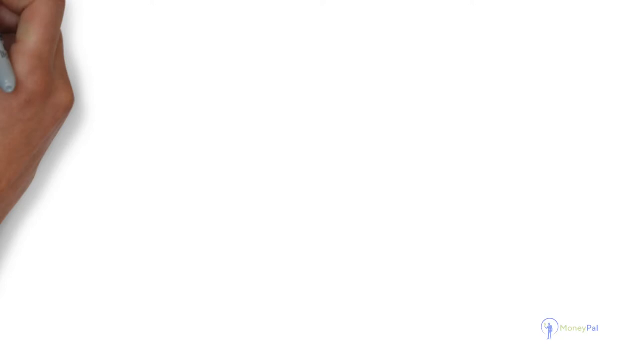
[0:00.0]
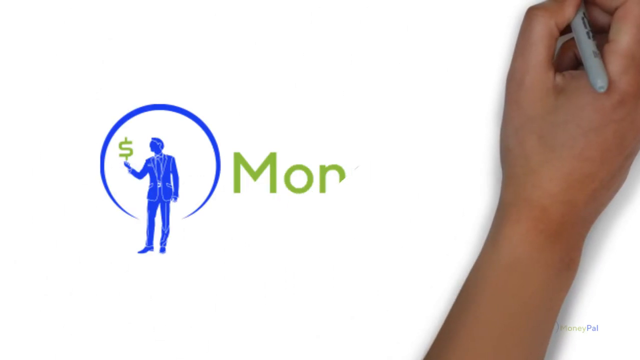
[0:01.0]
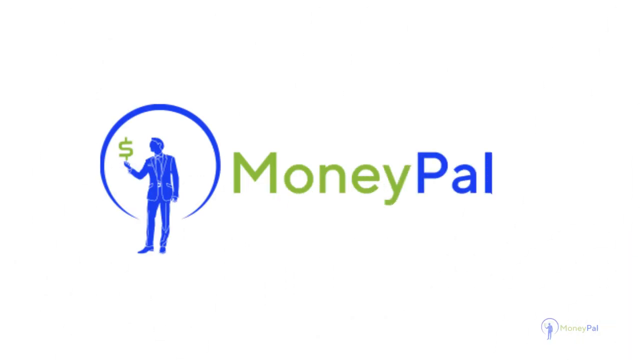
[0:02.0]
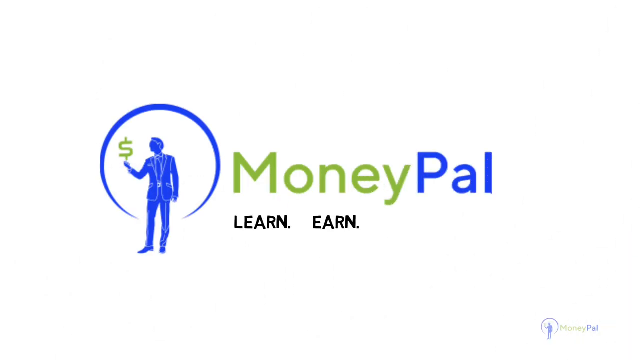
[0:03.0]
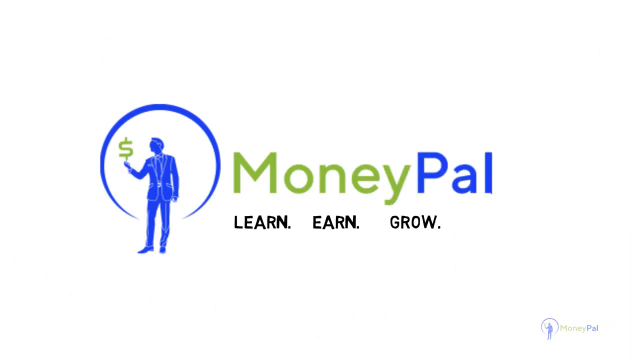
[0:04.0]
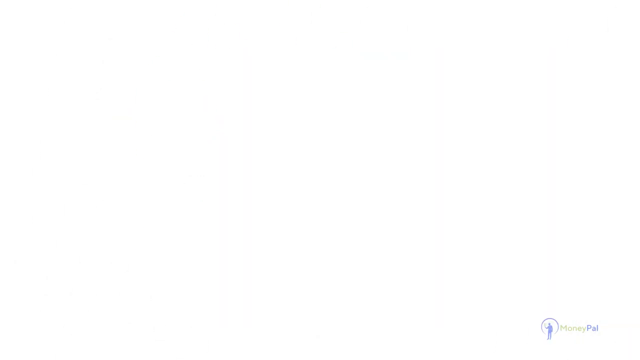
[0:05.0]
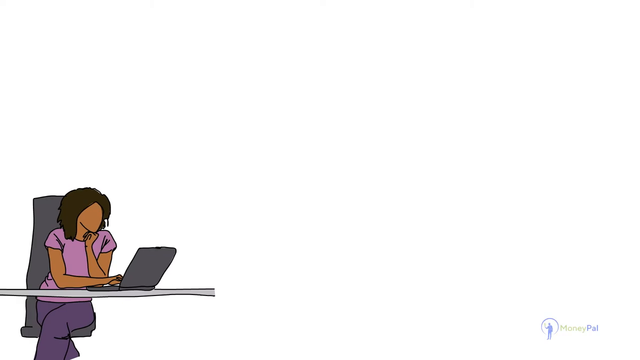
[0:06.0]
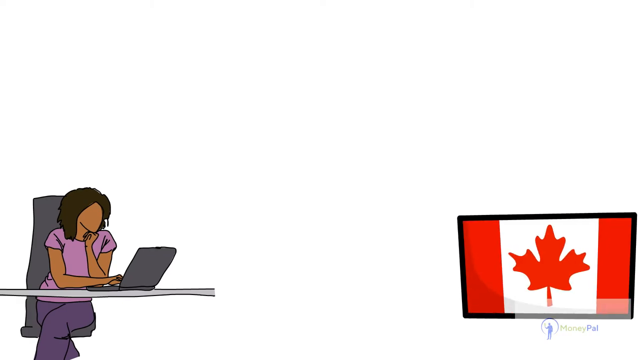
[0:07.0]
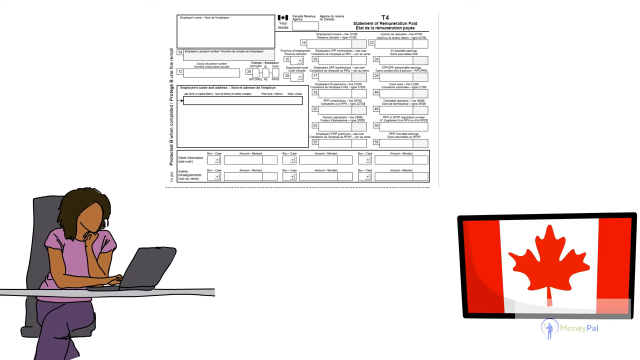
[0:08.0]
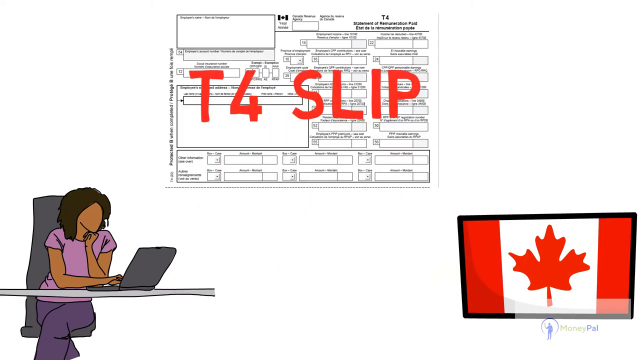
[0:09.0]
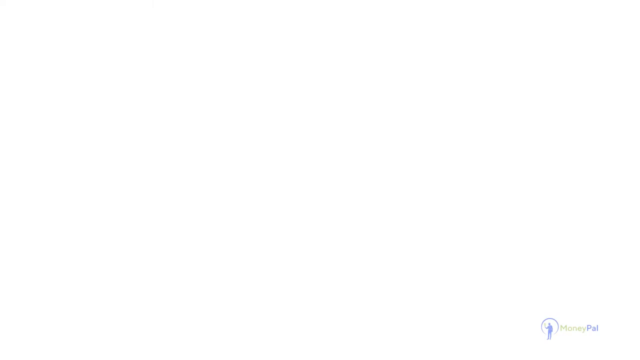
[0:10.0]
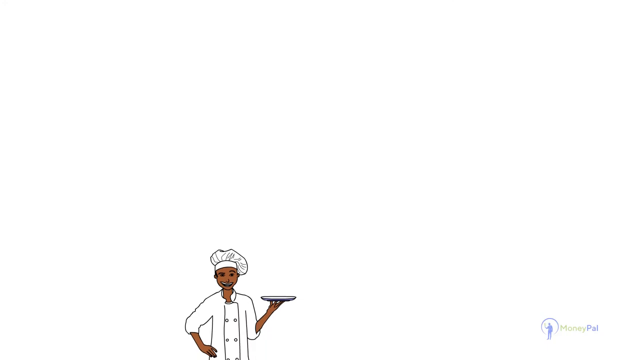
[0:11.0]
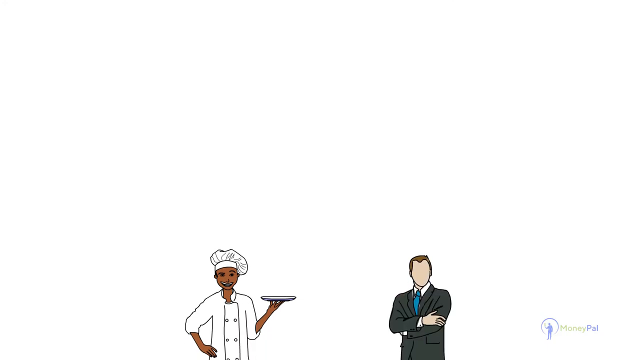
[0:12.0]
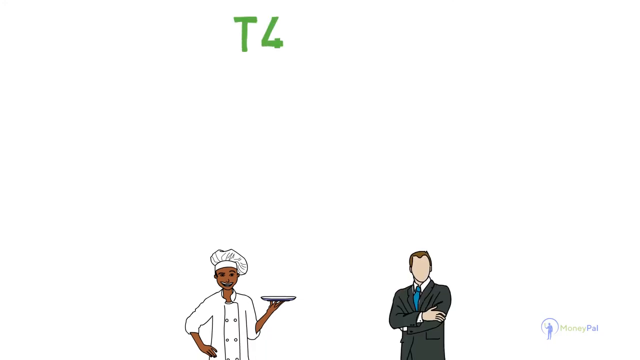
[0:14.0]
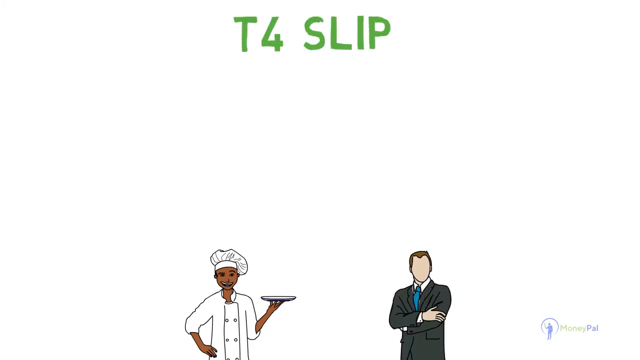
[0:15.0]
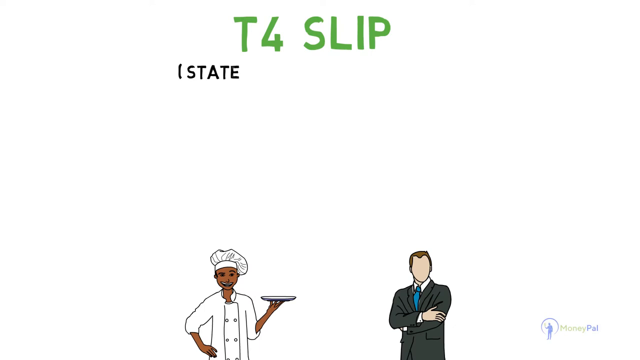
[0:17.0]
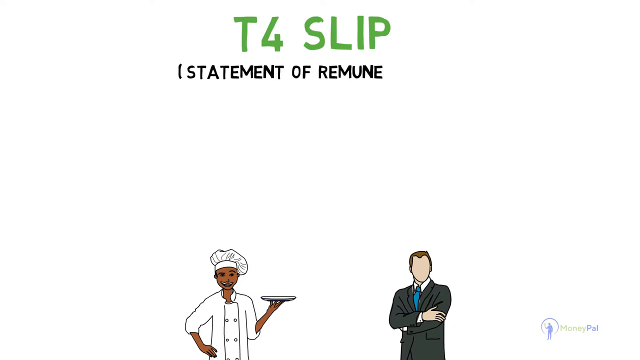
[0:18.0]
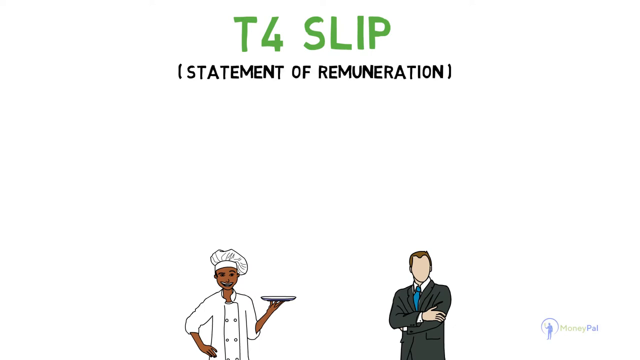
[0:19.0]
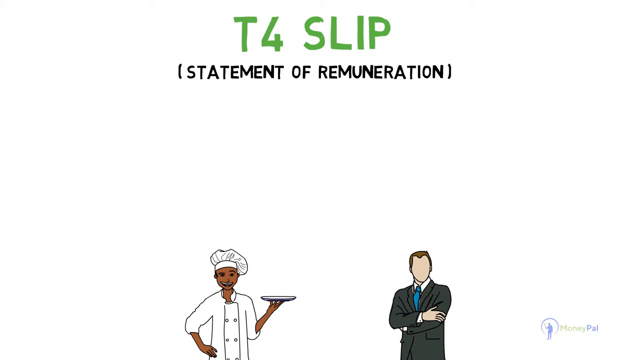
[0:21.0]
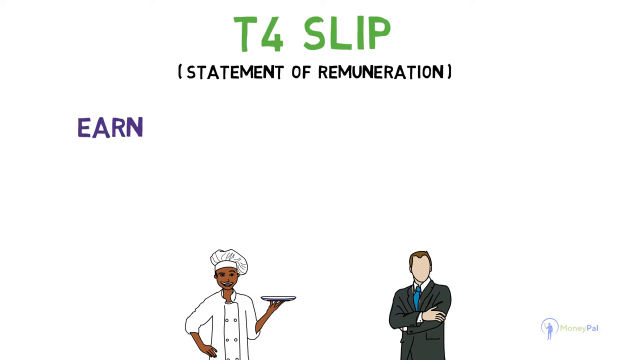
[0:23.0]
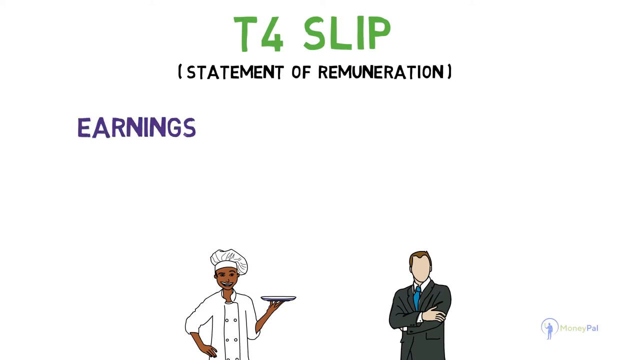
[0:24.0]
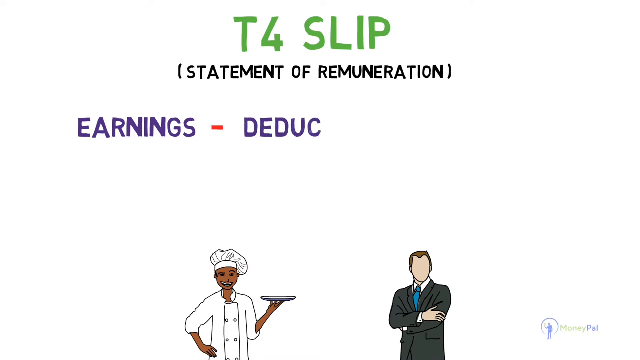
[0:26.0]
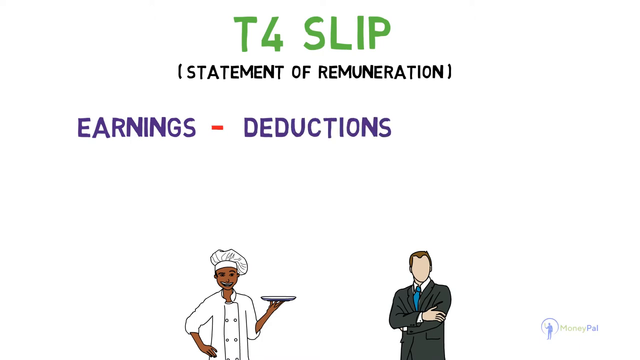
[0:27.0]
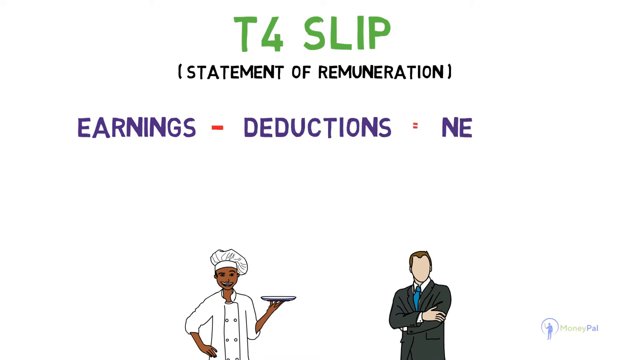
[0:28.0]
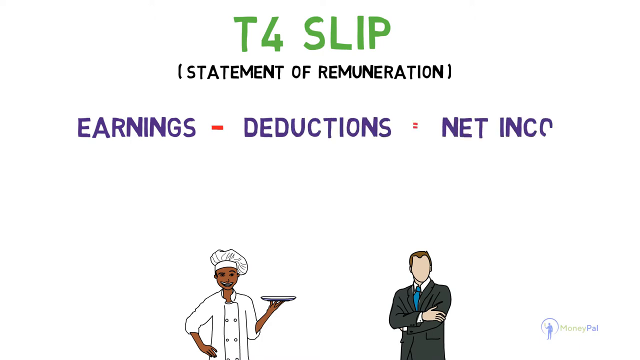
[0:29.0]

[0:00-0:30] A blank white paper appears, along with a person's arm beside it, and the person's hands are seen across the paper. A logo then appears that says "Manipal", with a symbol of a man standing holding a dollar sign inside a circle, and the word Manipal in green and blue. Under it is the motto "Learn and Grow". Next, a woman in a purple shirt looks towards a laptop; she has brown hair and no facial features: no eyes, no nose and no ears. On the right side is a Canadian flag. The hand comes back and writes "T4 slip", and then the elements fade out.